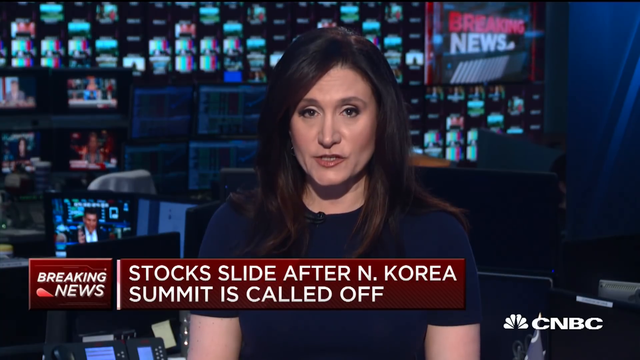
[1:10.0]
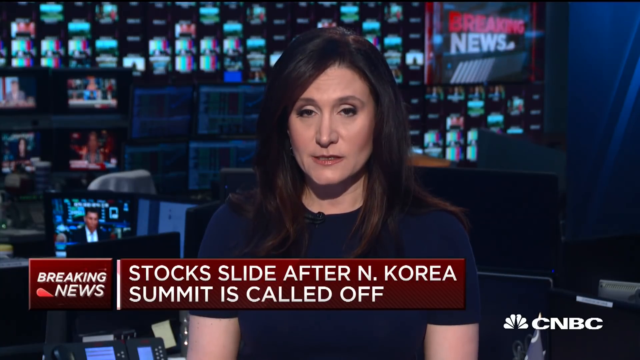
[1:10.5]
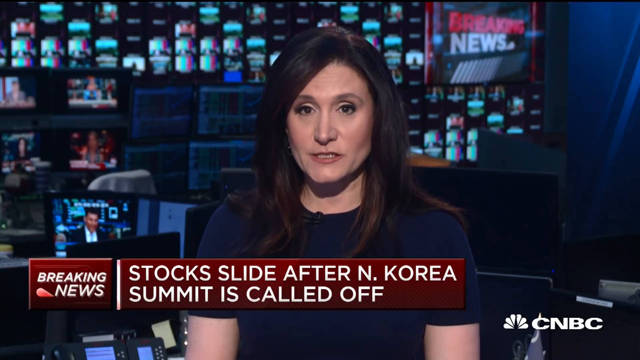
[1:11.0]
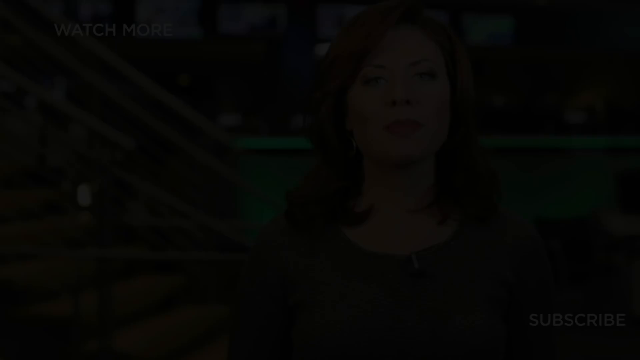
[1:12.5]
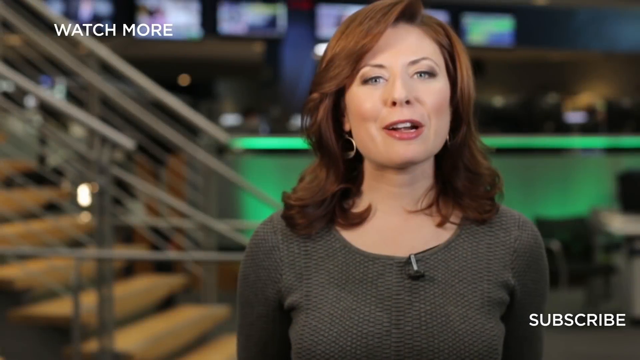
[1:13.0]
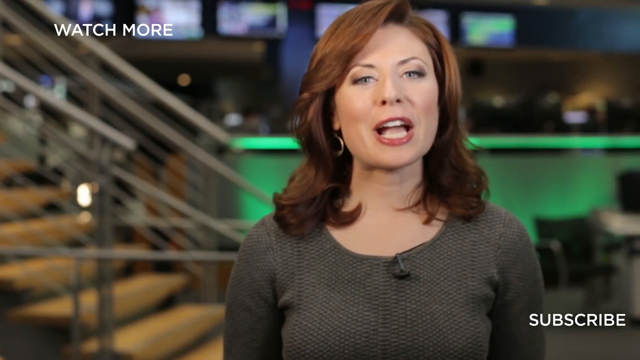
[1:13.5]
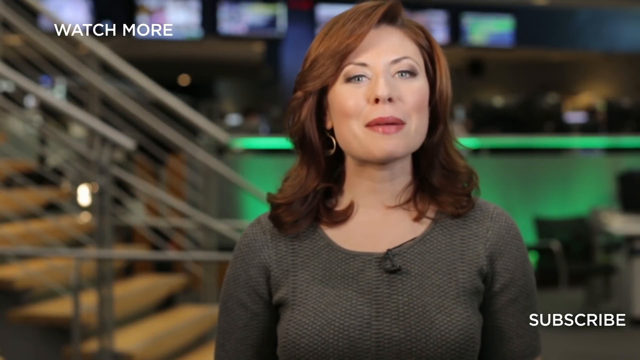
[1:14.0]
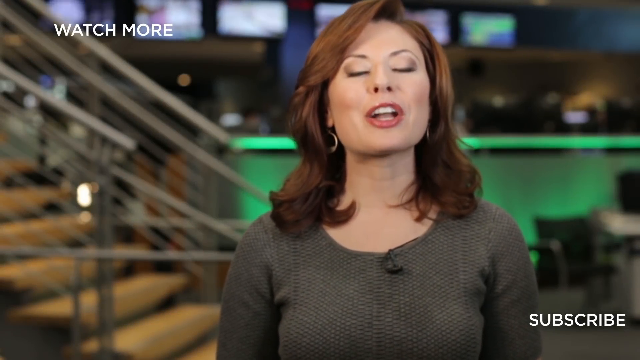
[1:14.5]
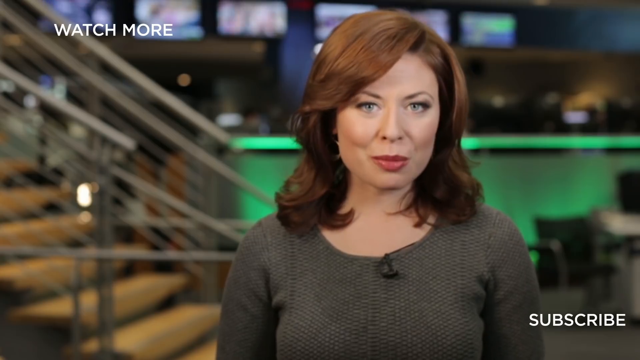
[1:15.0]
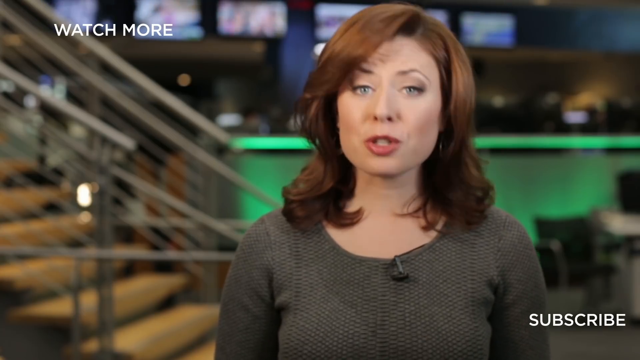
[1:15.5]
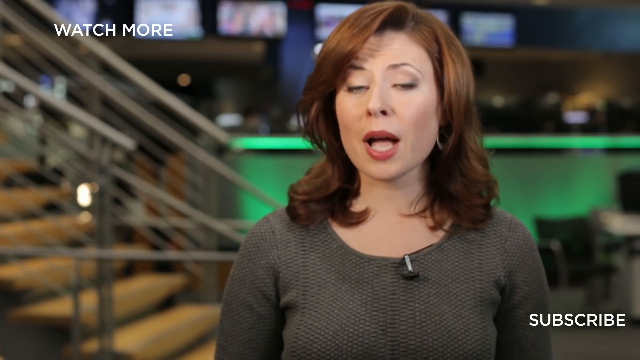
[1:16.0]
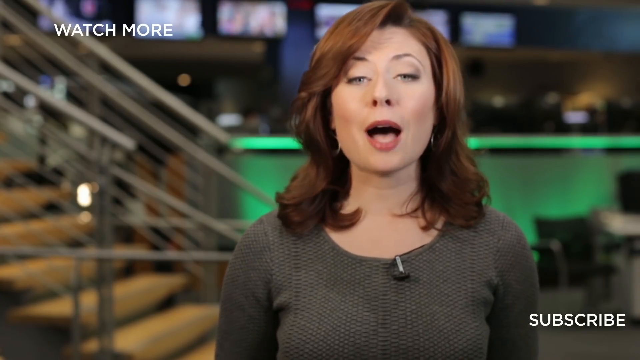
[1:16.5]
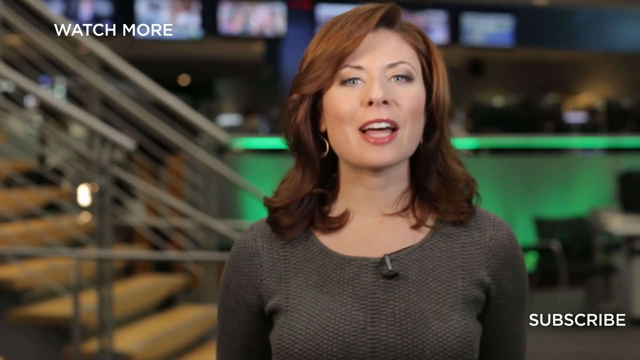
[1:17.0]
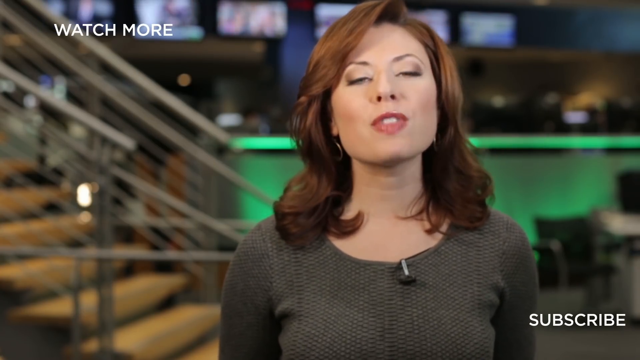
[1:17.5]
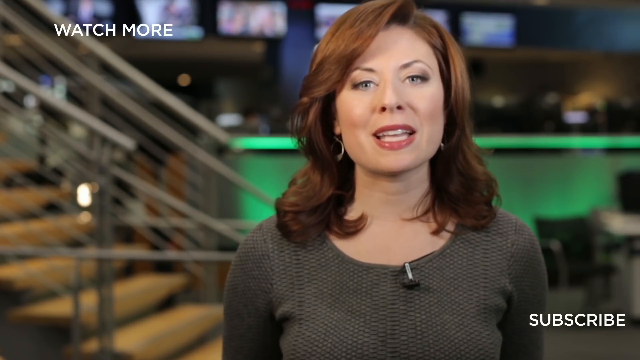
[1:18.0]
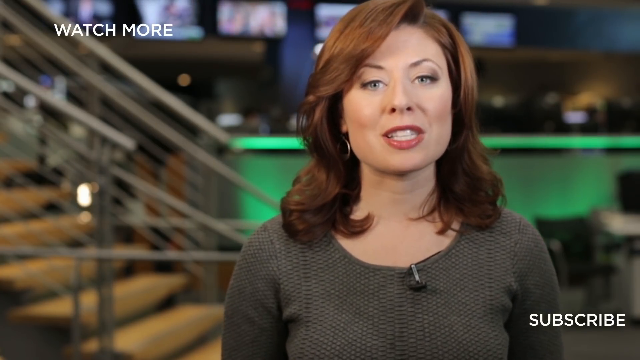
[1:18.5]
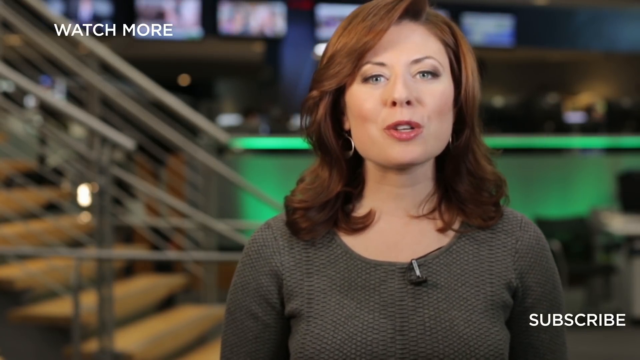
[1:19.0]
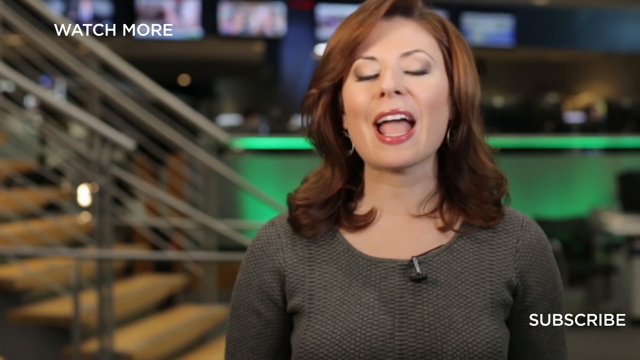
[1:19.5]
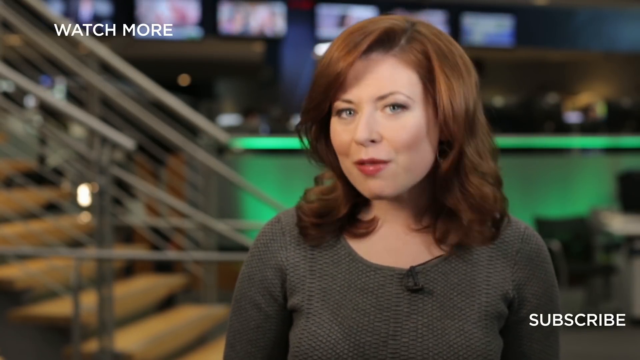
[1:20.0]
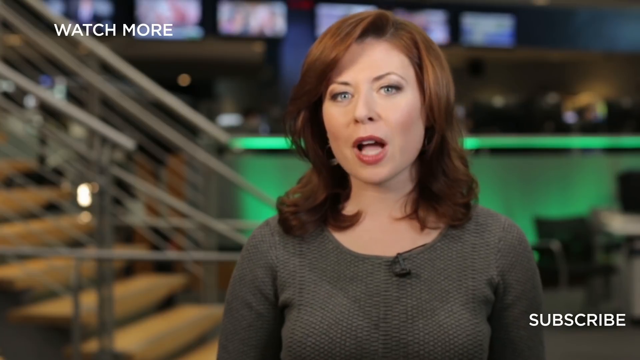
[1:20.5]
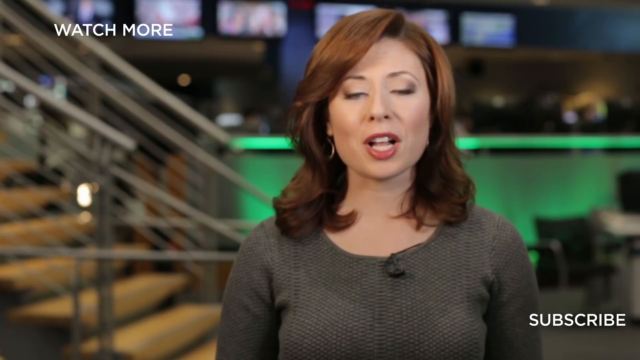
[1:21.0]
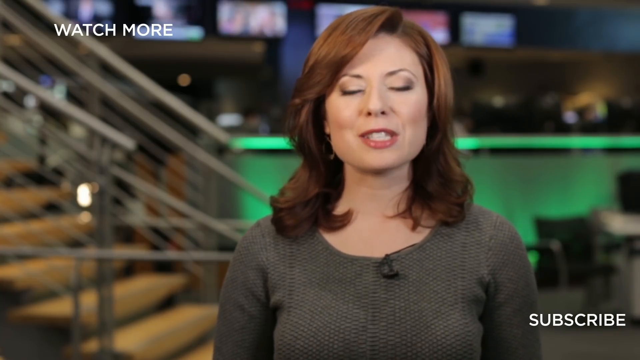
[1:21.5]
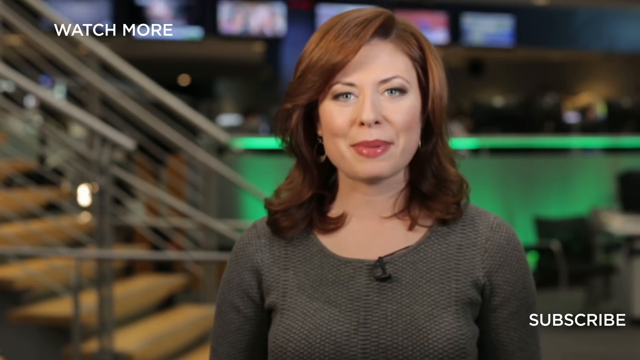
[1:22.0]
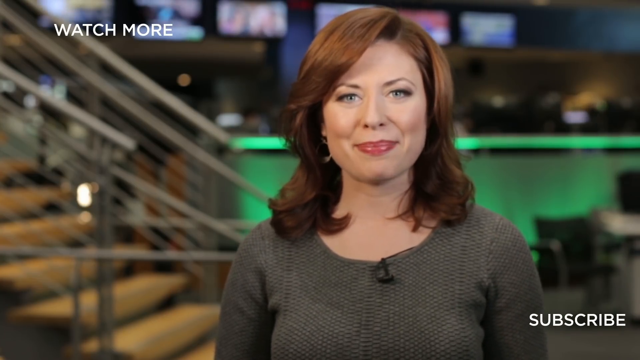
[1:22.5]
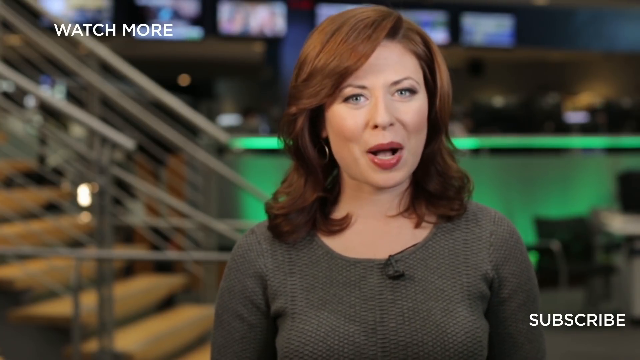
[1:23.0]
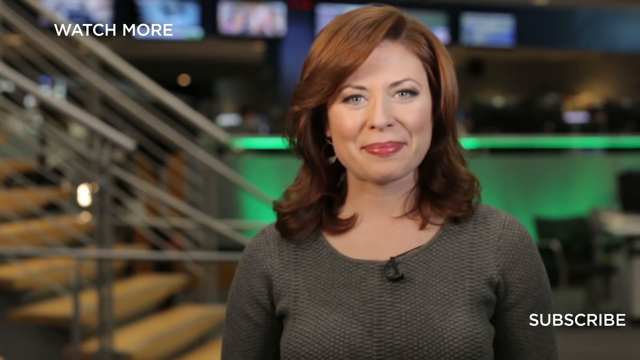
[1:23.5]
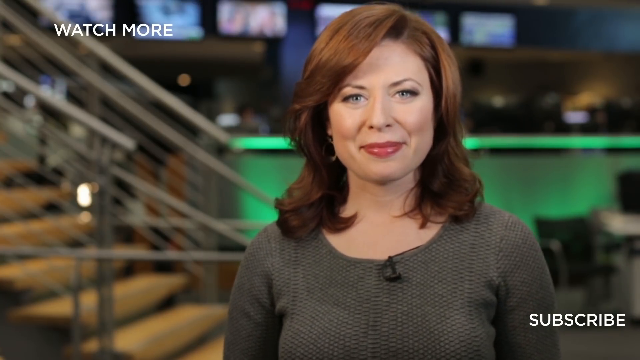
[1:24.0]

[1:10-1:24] At the end of the segment, a CNBC journalist with long blonde hair, wearing a dark dress and holding a microphone, addresses viewers. On screen is the text "watch more," with "subscription" written below it. Behind her are blurry images of screens, some blurry lights, some blurry green equipment, and something more like a staircase.